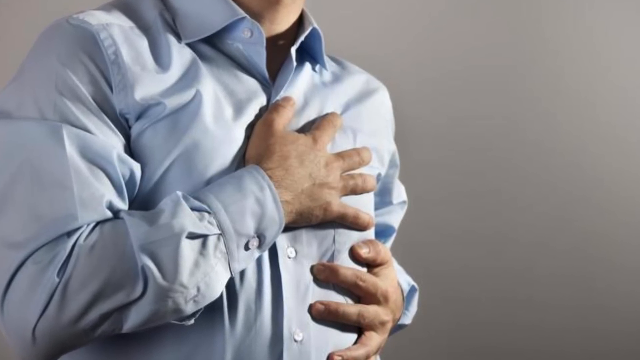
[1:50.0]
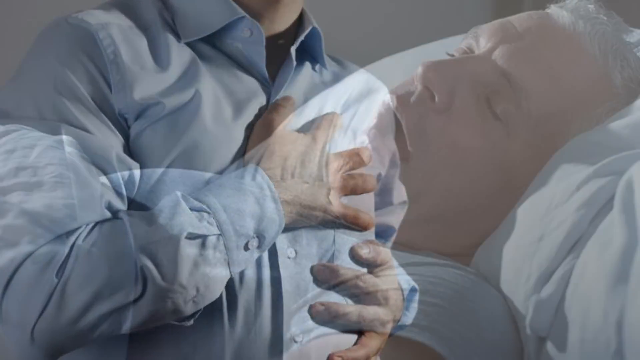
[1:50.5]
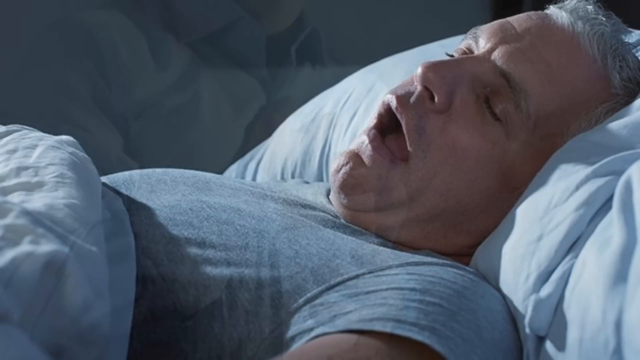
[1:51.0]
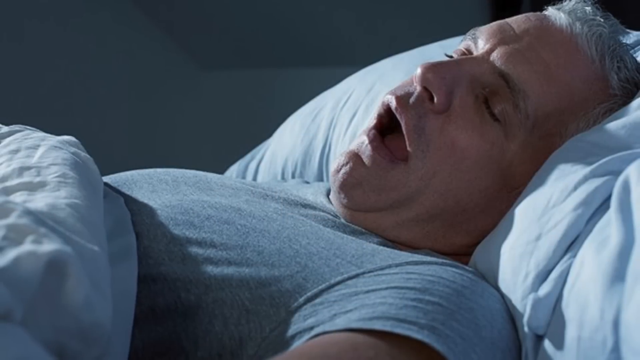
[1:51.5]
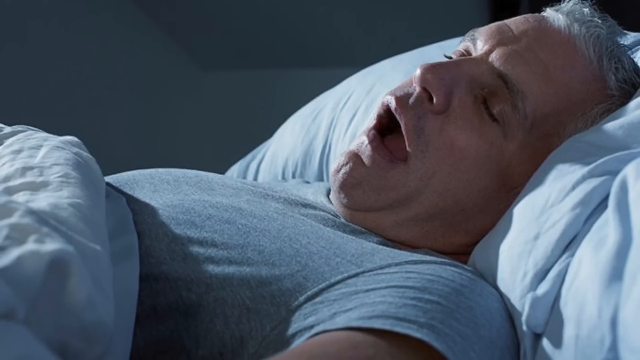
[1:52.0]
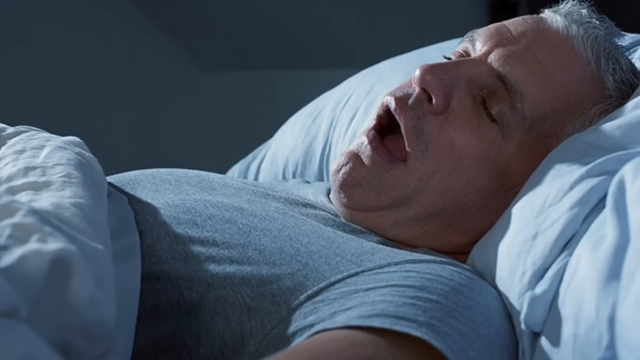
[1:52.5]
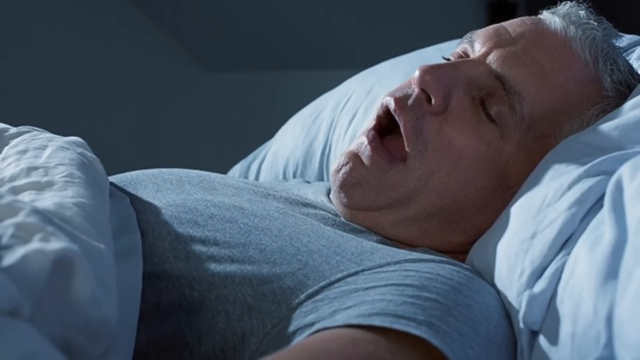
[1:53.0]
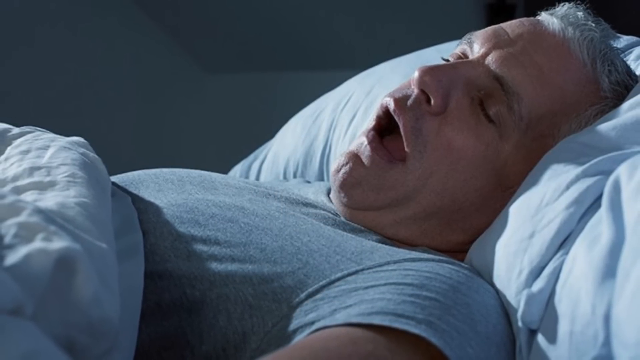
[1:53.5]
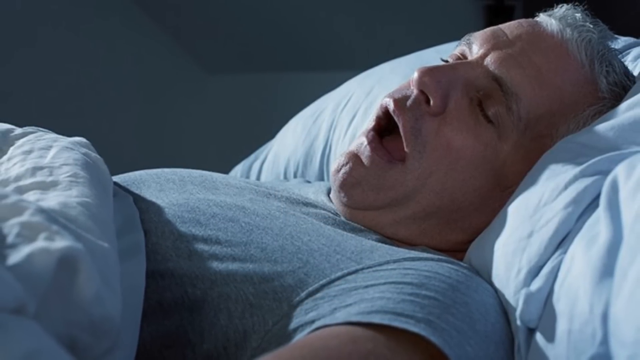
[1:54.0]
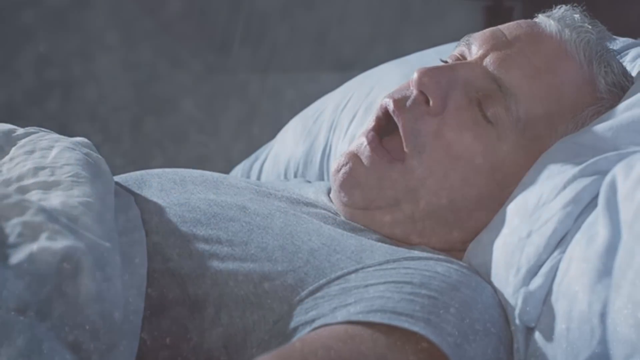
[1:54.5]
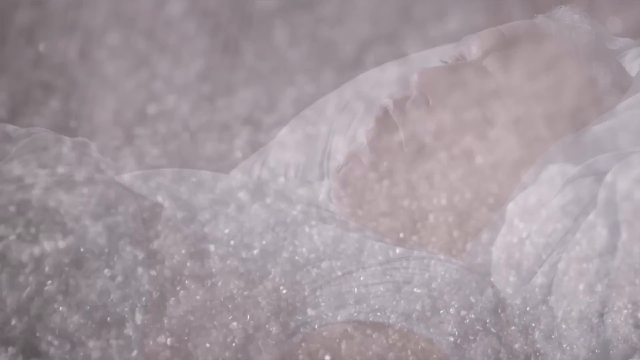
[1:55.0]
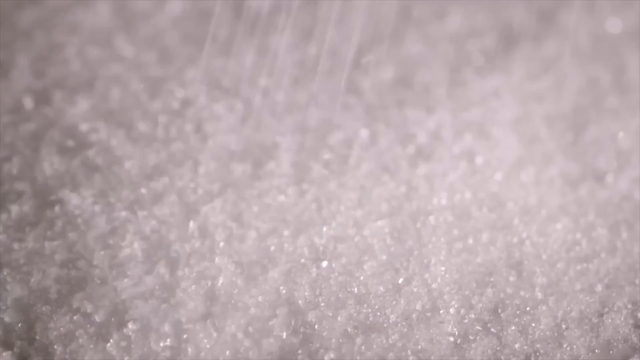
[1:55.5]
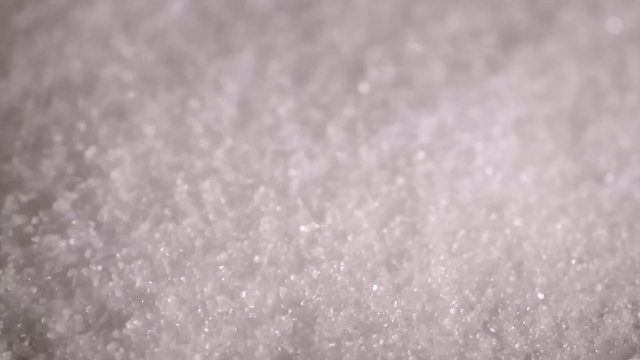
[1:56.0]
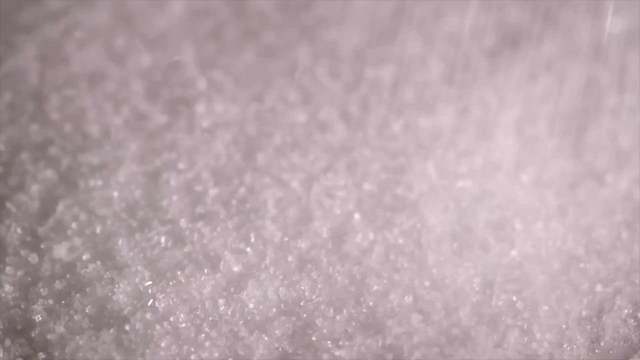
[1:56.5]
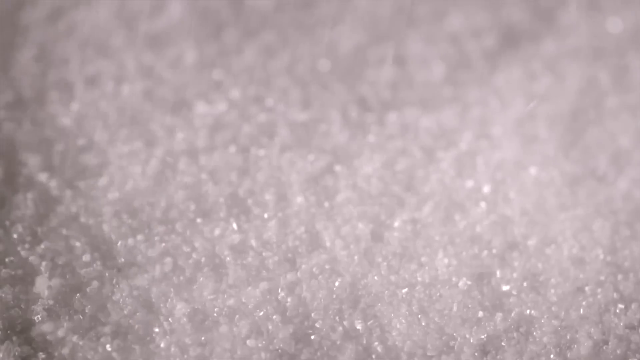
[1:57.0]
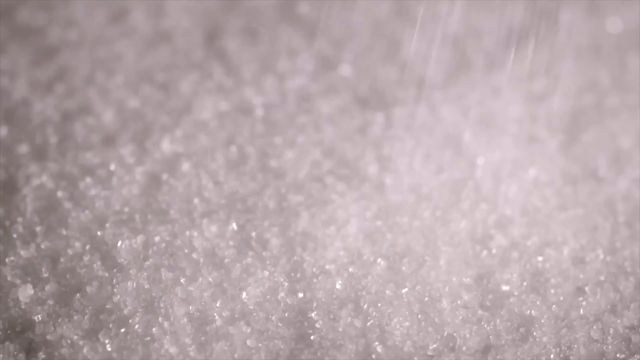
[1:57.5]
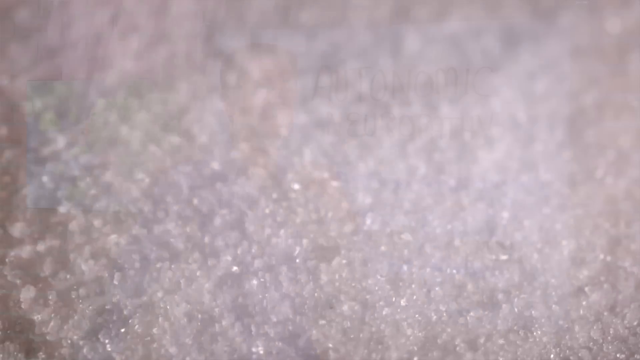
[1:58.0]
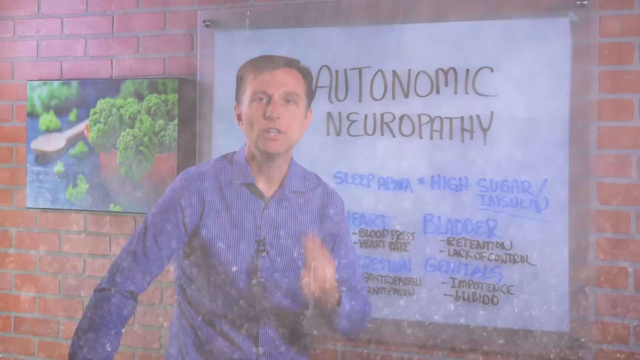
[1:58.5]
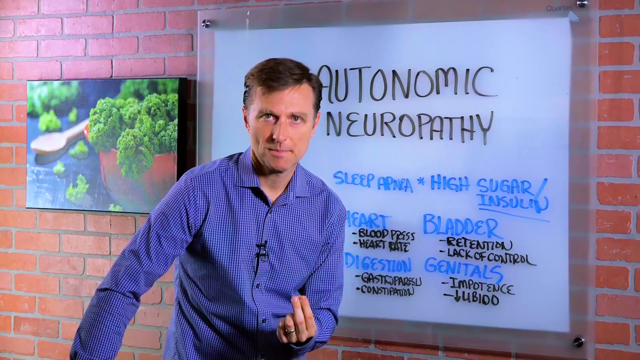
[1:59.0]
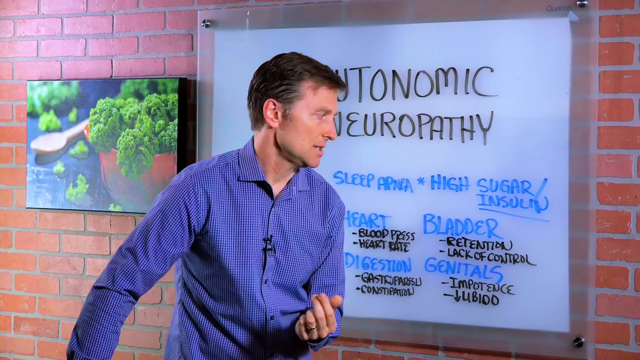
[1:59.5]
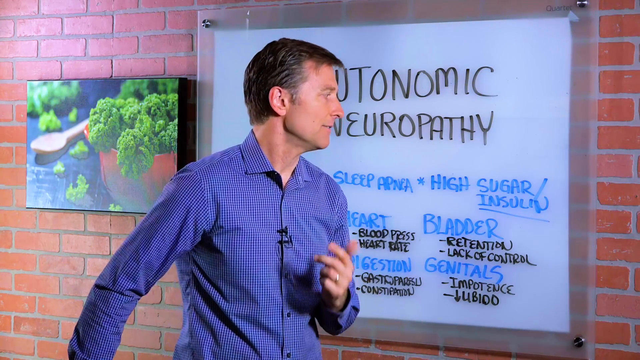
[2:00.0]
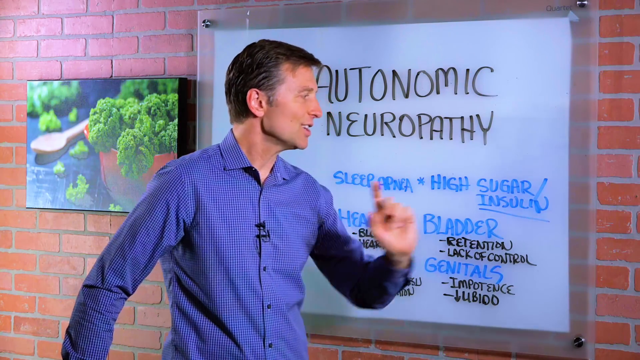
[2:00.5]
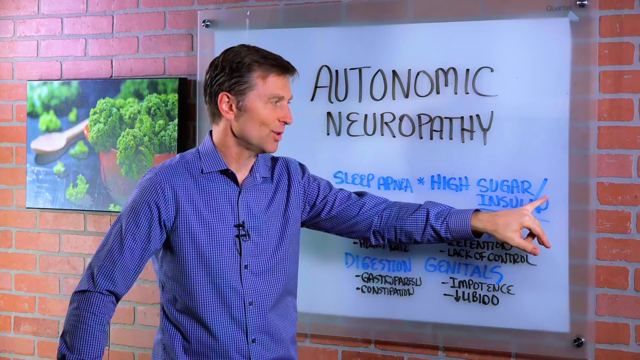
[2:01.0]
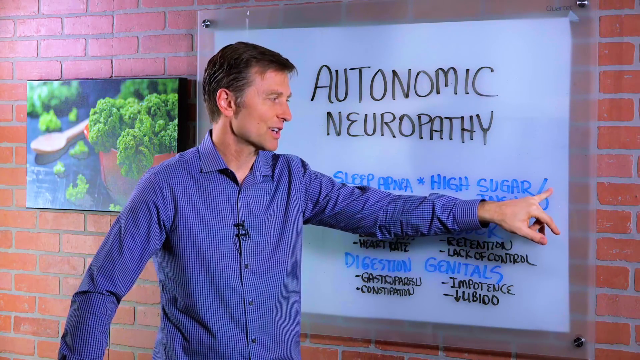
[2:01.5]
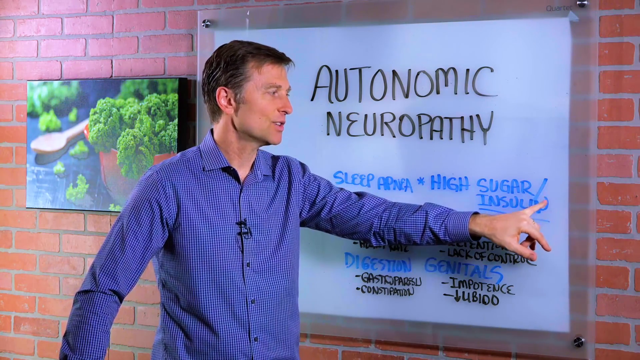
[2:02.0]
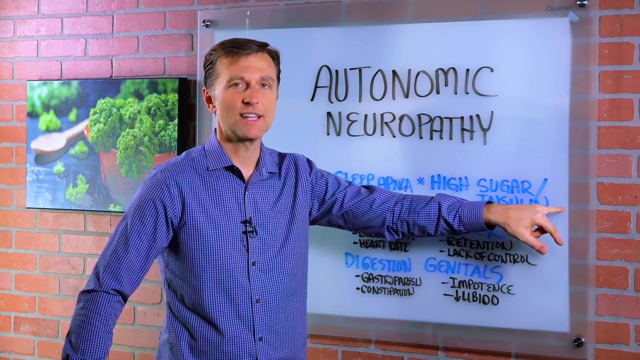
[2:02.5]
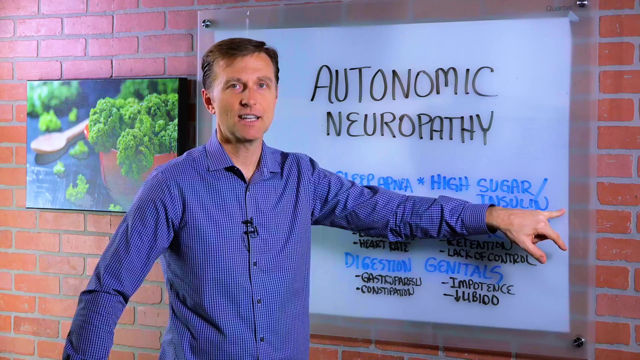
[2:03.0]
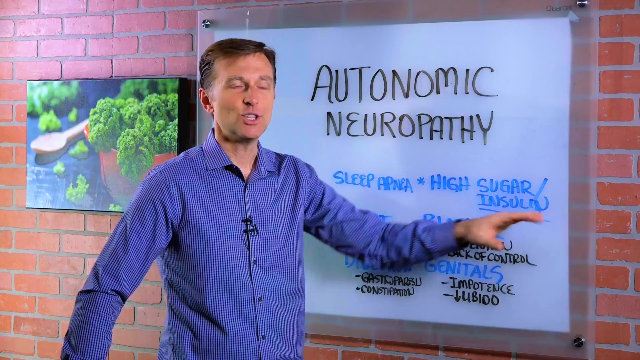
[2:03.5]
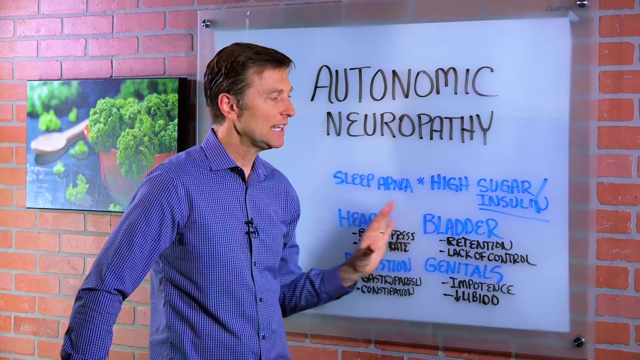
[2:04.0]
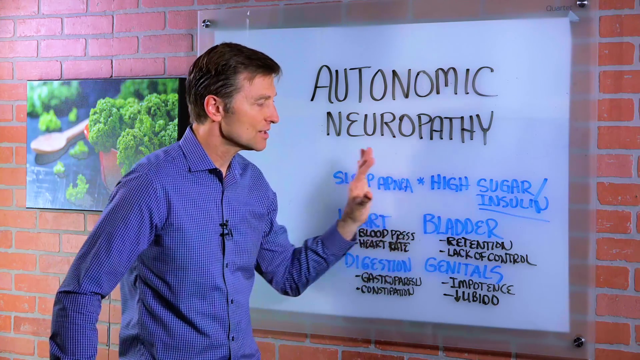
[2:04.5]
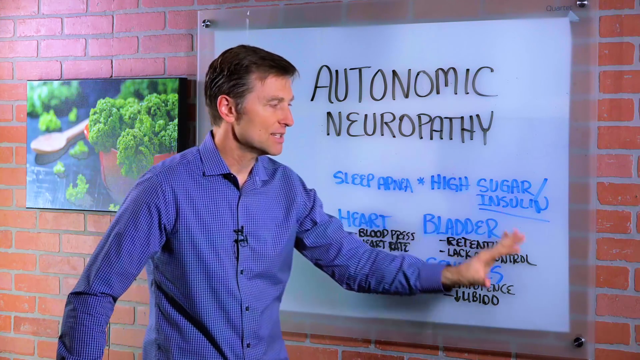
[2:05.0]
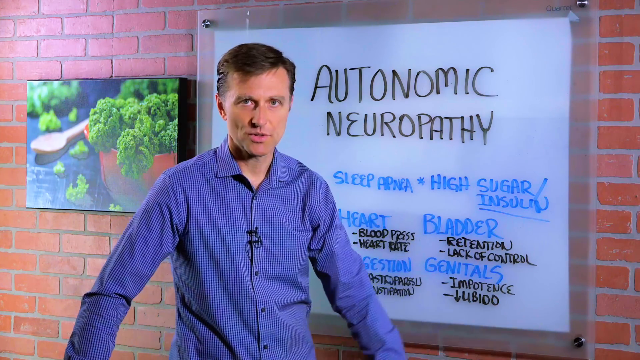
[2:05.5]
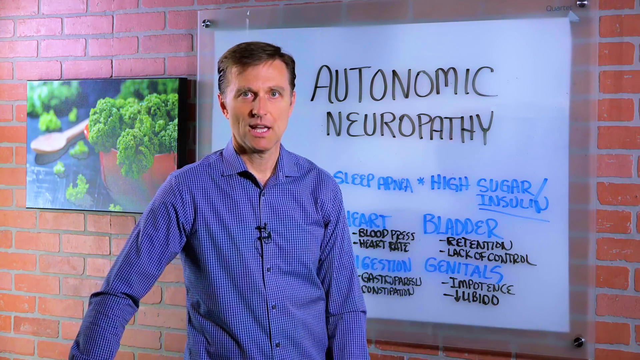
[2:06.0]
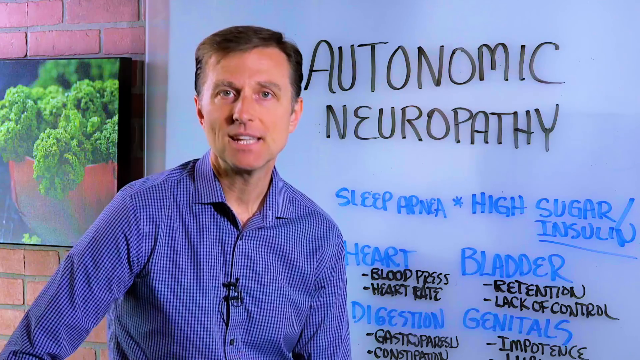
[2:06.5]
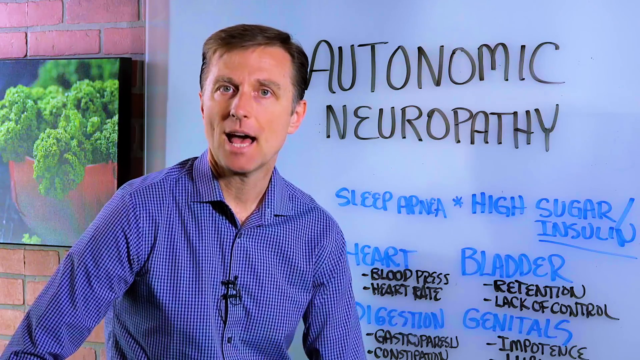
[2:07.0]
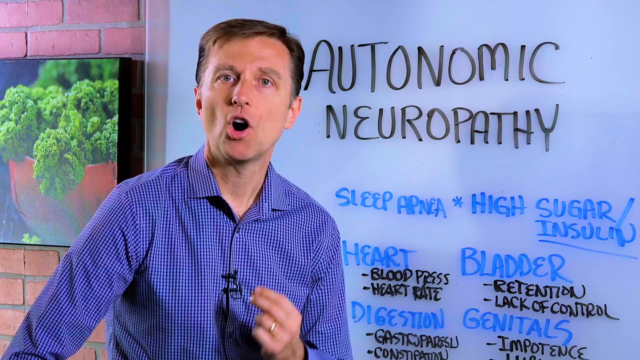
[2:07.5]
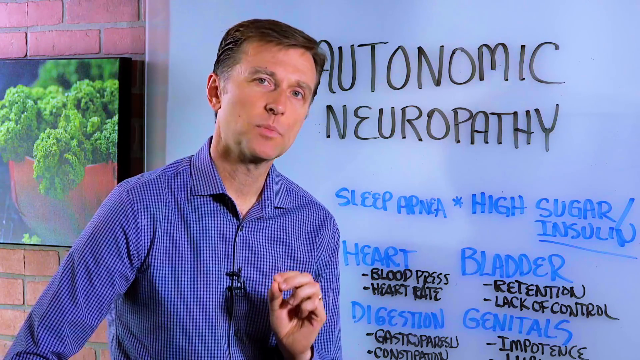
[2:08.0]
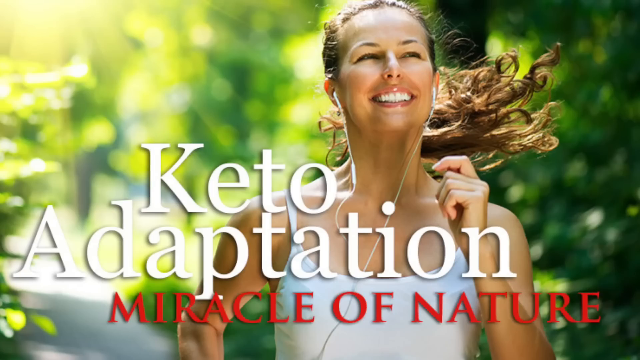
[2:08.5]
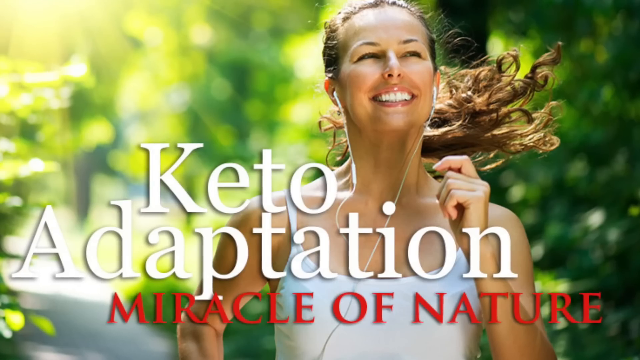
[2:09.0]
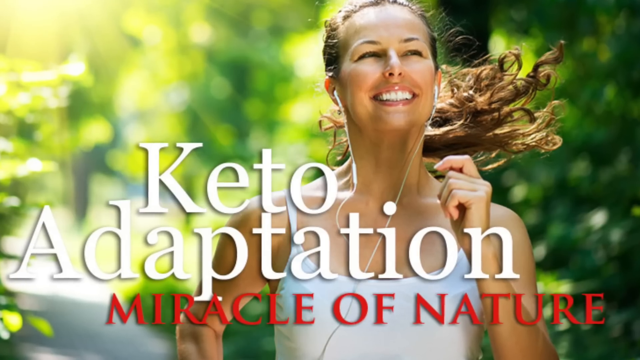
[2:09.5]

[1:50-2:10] A man is shown from the neck down, without his face visible. He wears a light blue collared button-down shirt with long sleeves and white buttons. His right arm is close to his body, the forearm across his chest, with his palm touching the left side of his chest and his fingers outstretched. His left arm is also close to his body and bent at the elbow, his hand outstretched in front of him with the fingers slightly drawn in toward his body. Next, a man is lying in a bed, face up, on his back, with the back of his head firmly against a white pillow. His mouth is wide open as if he is snoring. He wears a gray short-sleeved t-shirt, and a white duvet covers him.